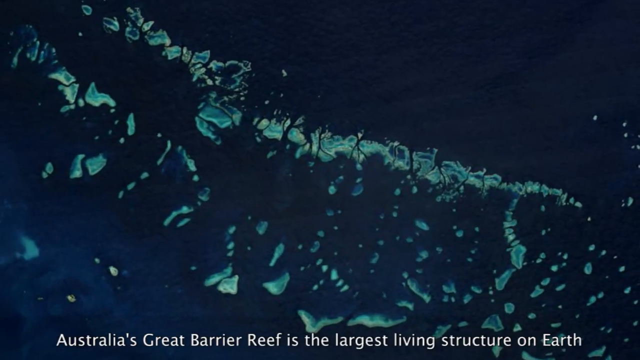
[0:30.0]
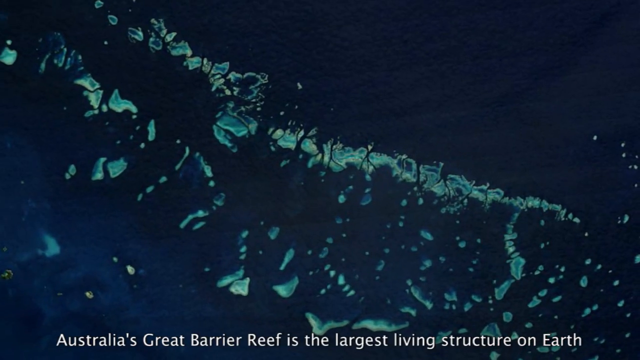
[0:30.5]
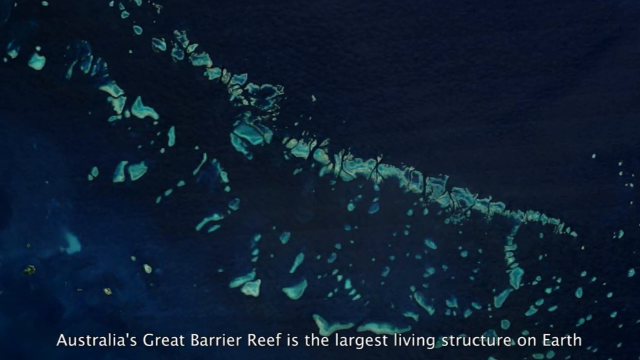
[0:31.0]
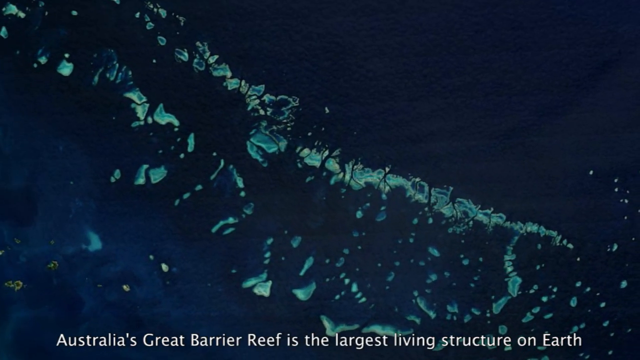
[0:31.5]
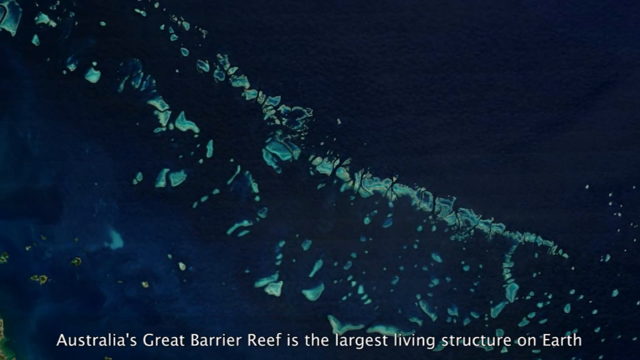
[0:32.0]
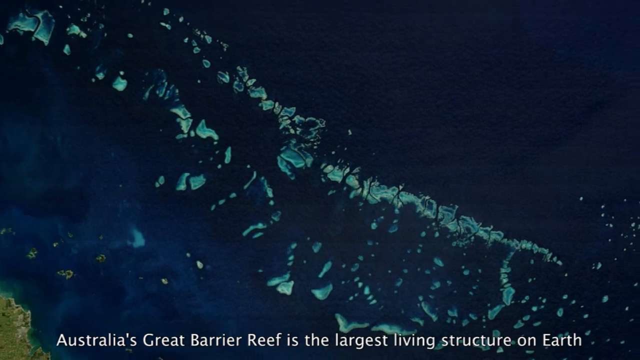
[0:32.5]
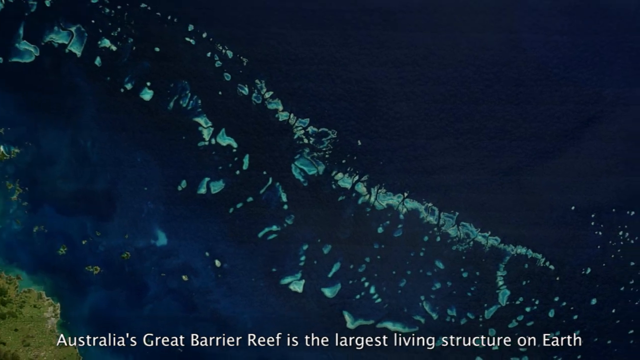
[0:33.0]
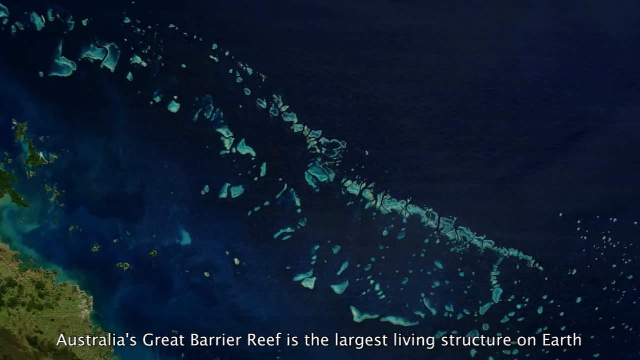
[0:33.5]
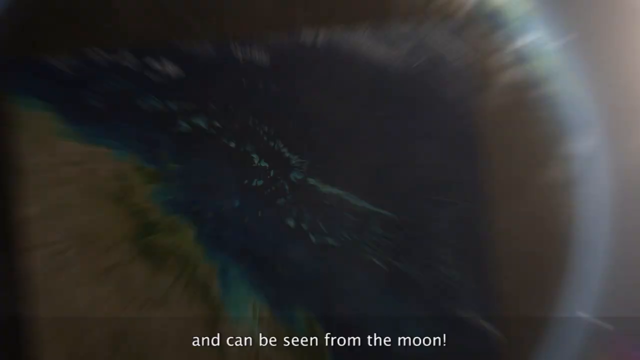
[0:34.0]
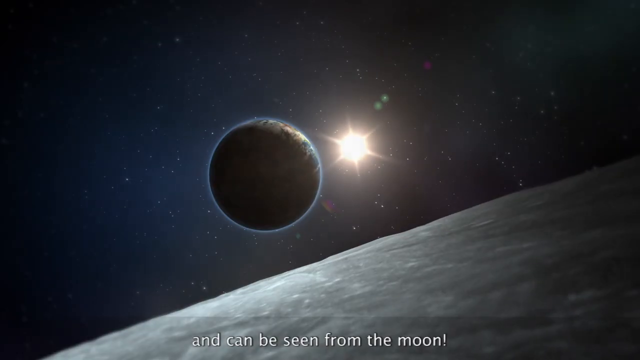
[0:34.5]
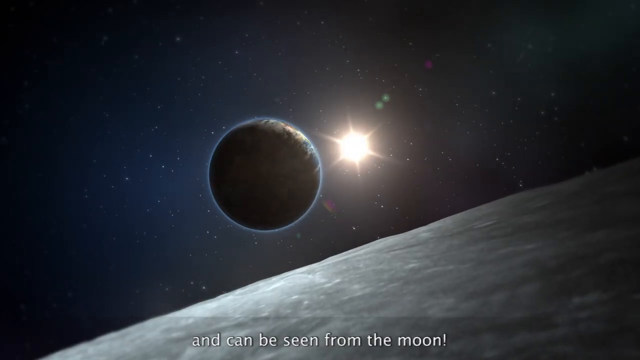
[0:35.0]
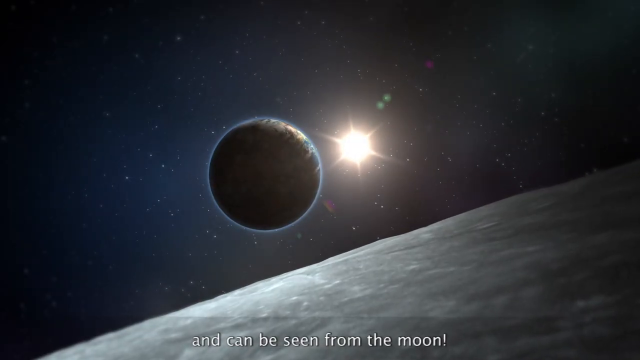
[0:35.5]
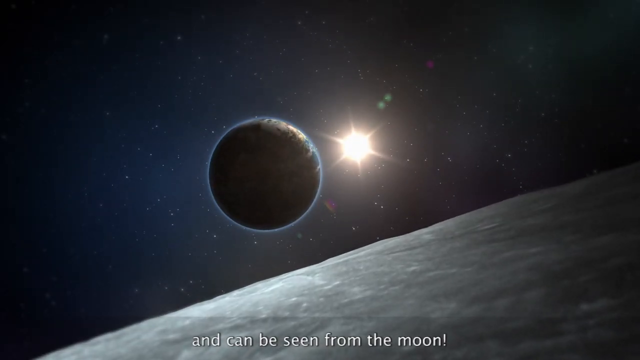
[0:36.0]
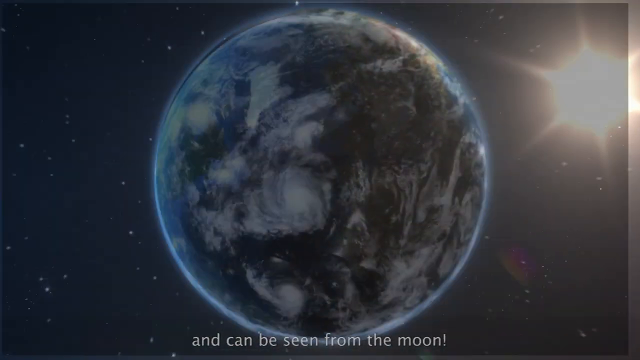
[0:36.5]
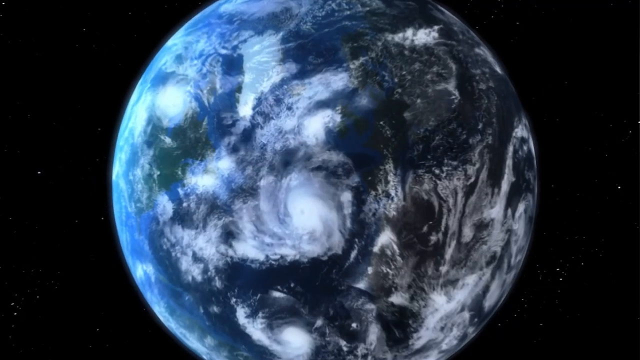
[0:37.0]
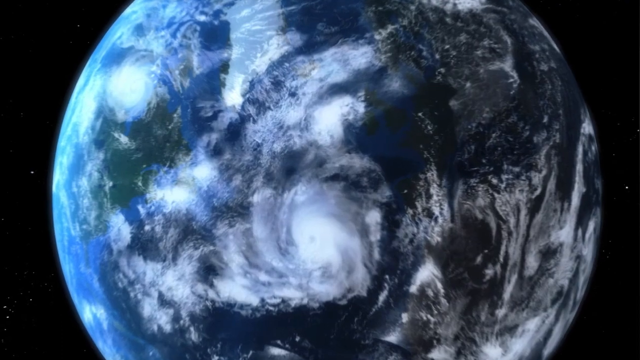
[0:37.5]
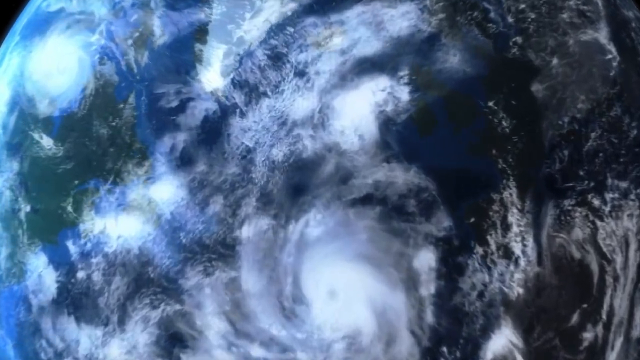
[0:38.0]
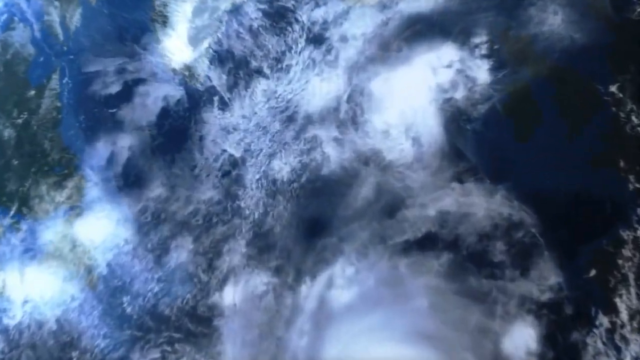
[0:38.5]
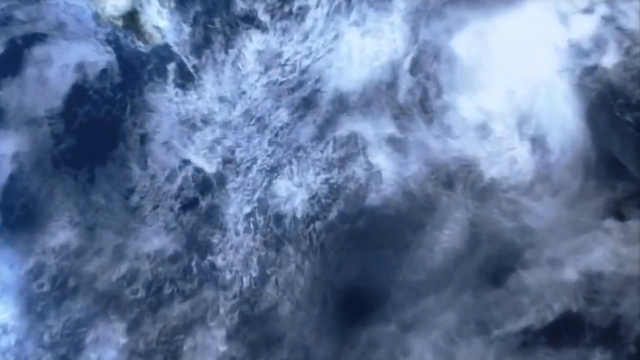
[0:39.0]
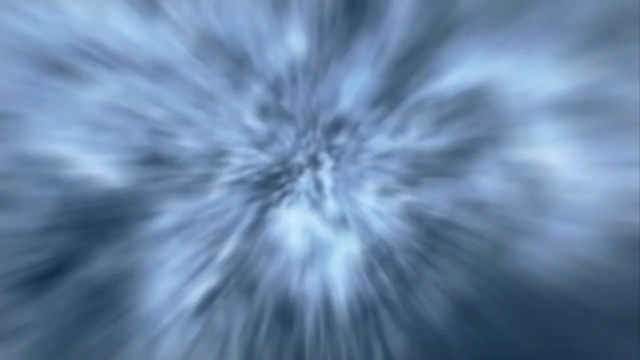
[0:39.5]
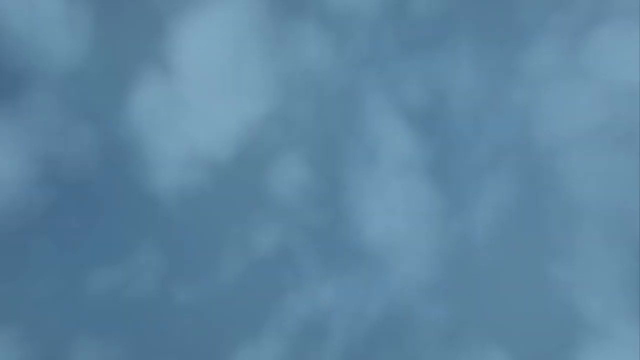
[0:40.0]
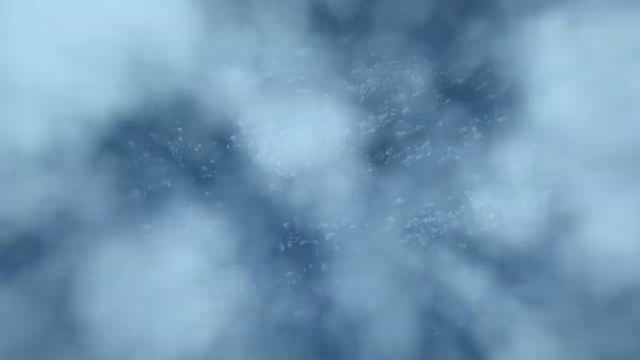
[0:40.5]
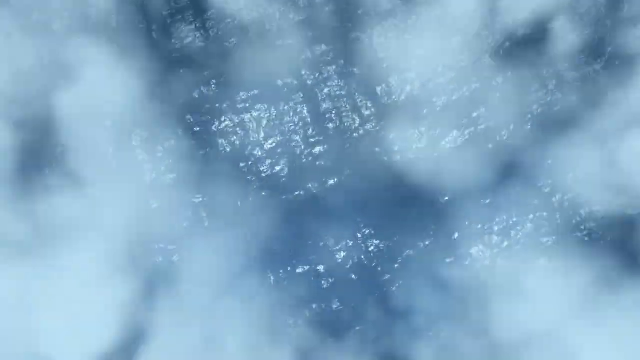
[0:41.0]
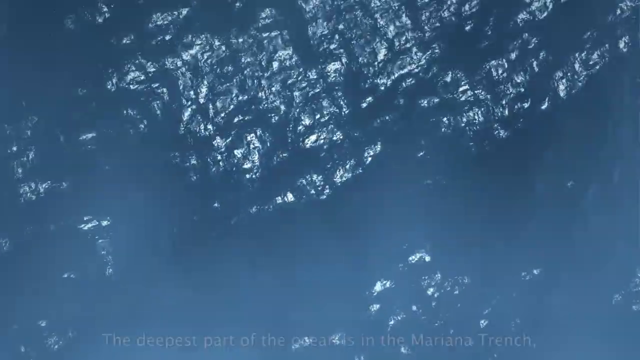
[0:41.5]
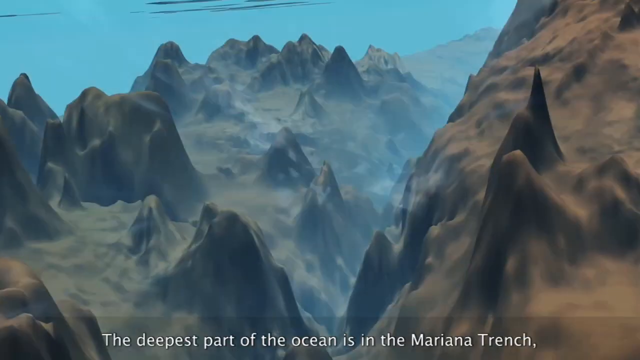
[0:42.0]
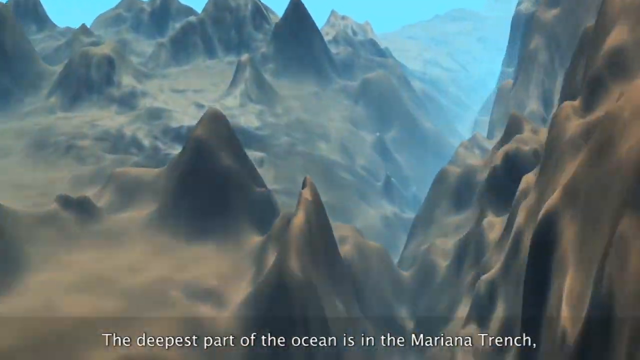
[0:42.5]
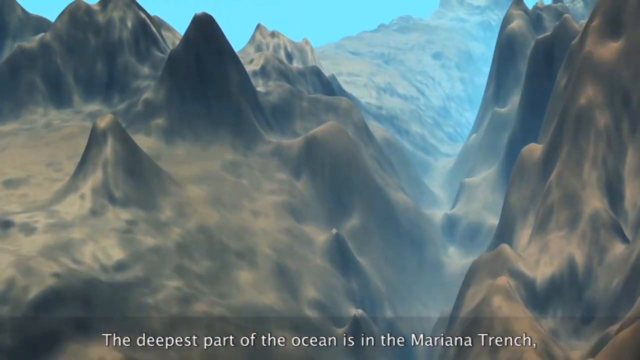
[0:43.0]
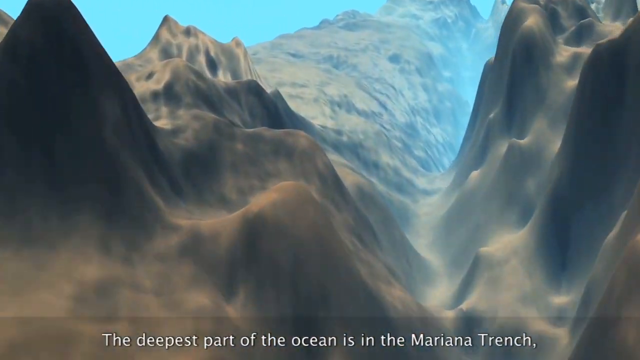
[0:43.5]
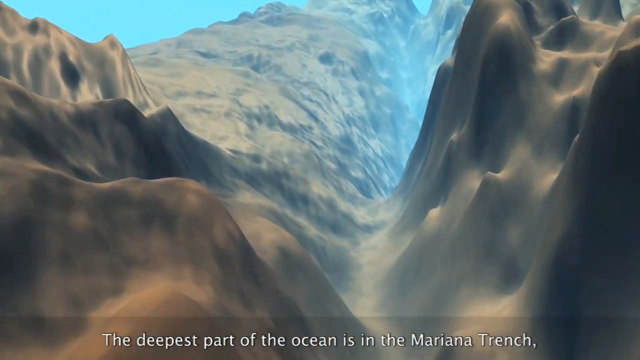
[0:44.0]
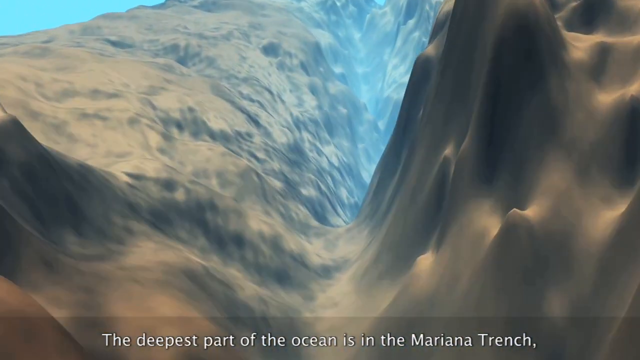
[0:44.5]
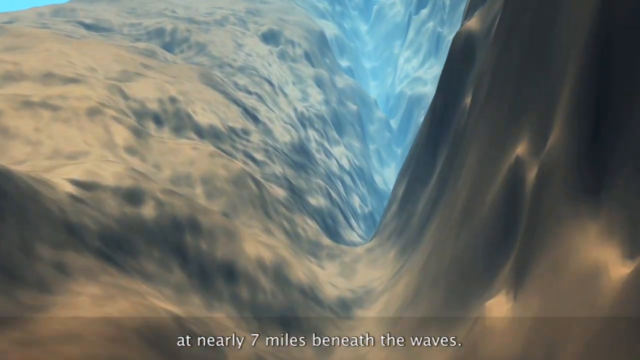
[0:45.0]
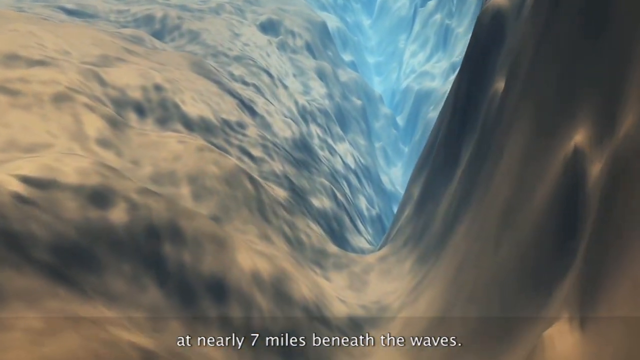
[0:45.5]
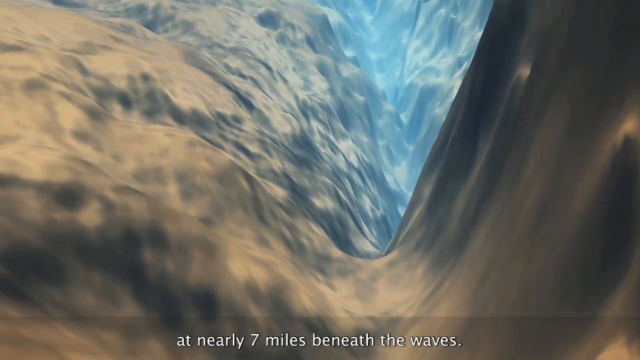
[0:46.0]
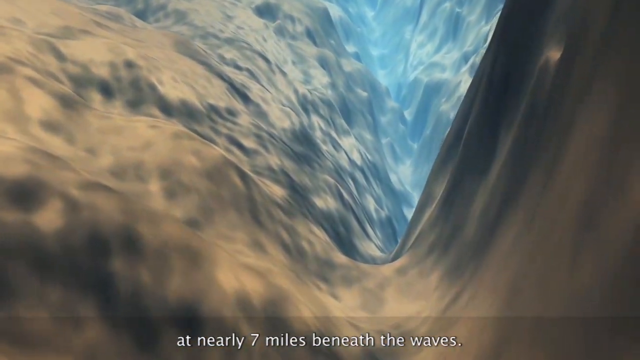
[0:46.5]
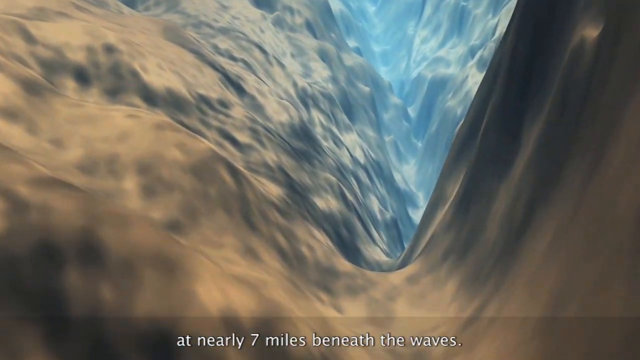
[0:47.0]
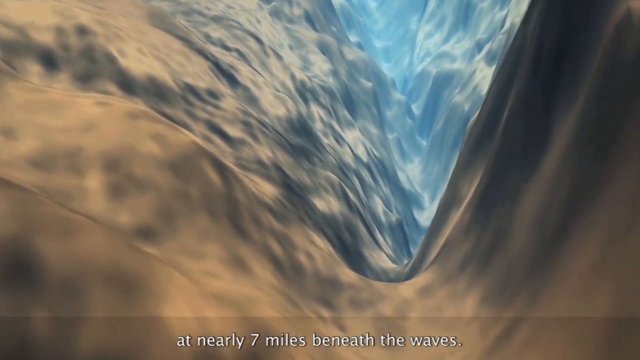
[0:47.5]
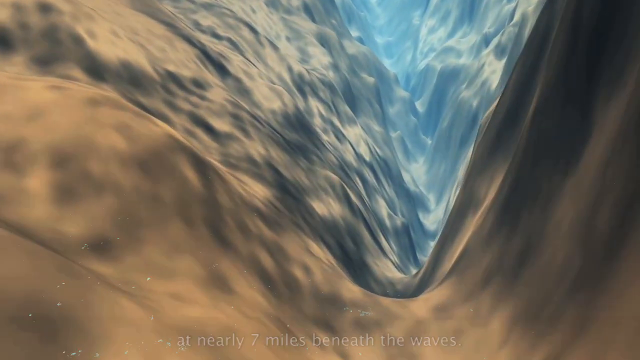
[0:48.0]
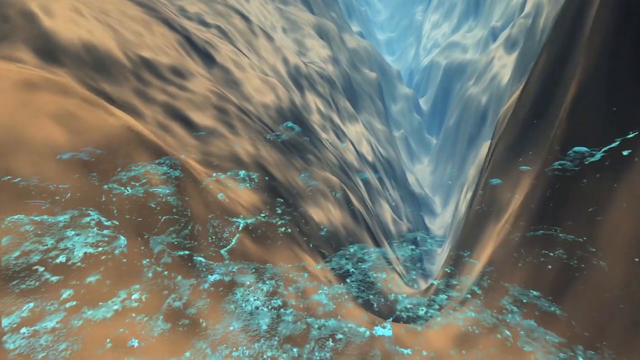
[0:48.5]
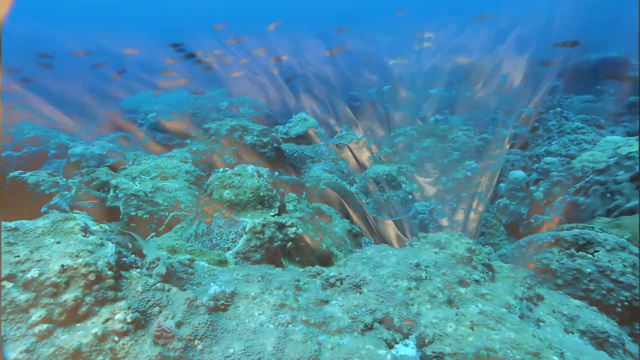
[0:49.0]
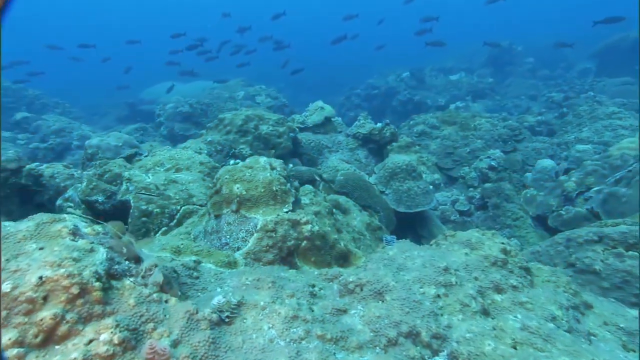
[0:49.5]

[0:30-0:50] Australia's Great Barrier Reef is shown, with the statement that "it can be seen from the moon." The view zooms in on the earth and different parts of the ocean. Text reads "The deepest part of the ocean is the Mariana Trench at nearly seven miles beneath the waves," and different rocks and things at very deep portions of the ocean are shown.